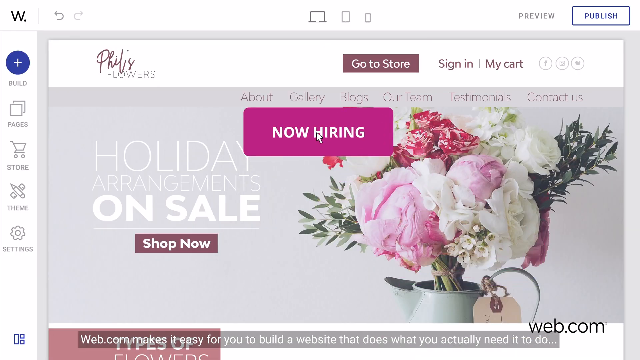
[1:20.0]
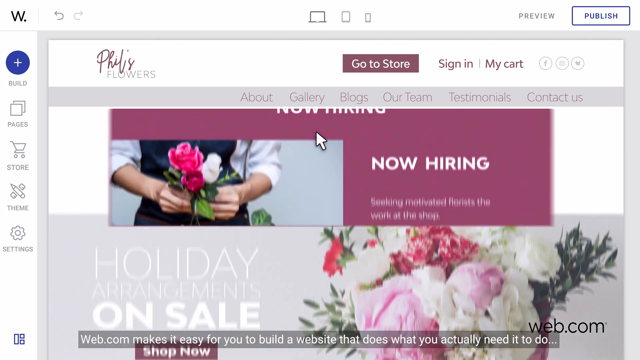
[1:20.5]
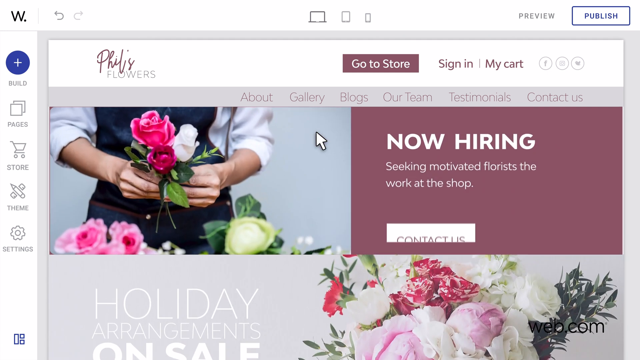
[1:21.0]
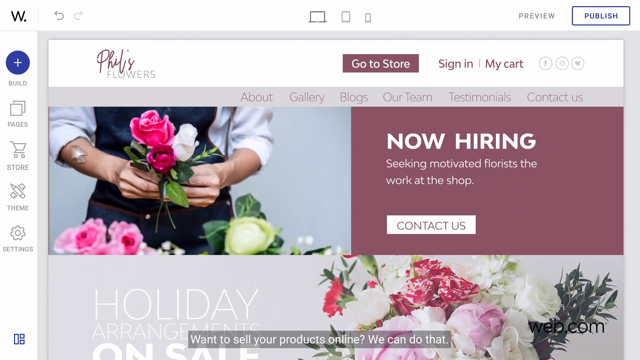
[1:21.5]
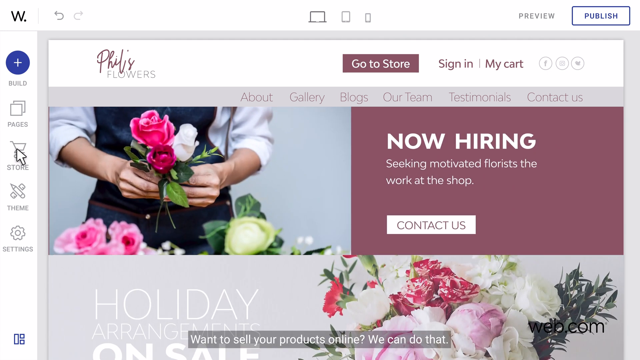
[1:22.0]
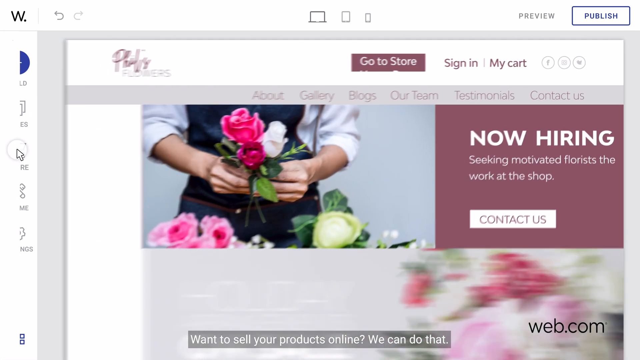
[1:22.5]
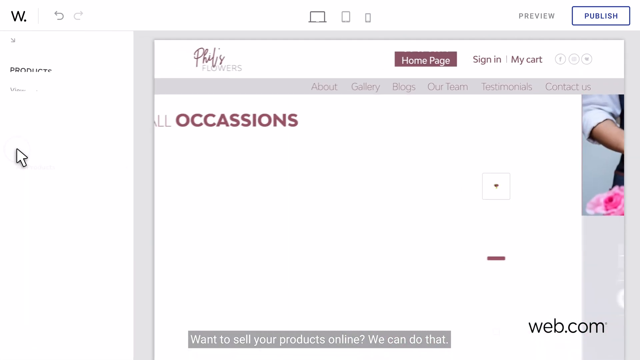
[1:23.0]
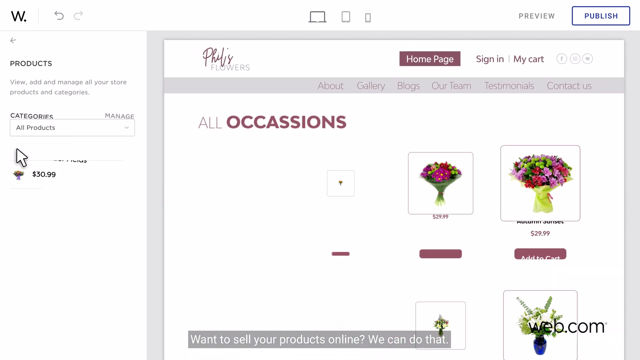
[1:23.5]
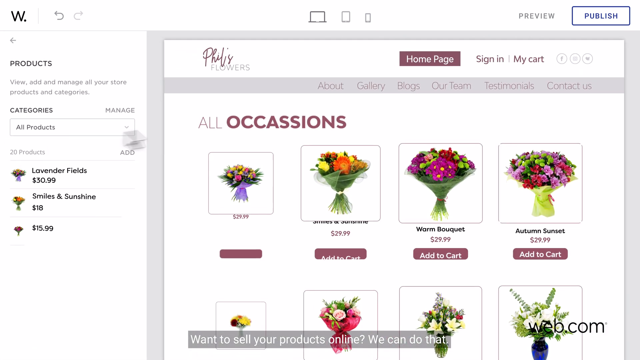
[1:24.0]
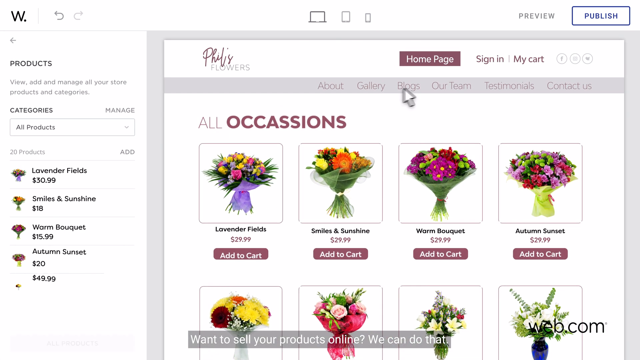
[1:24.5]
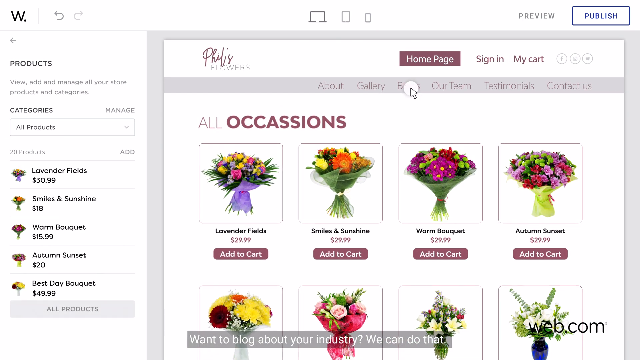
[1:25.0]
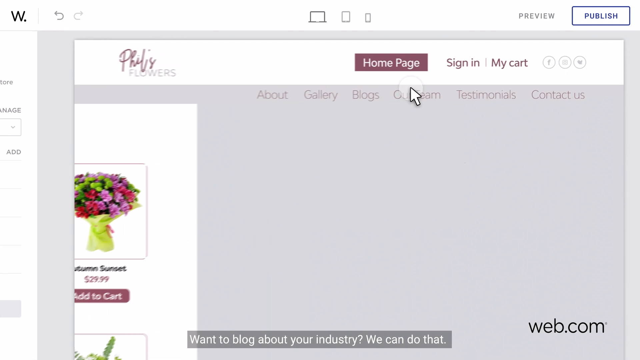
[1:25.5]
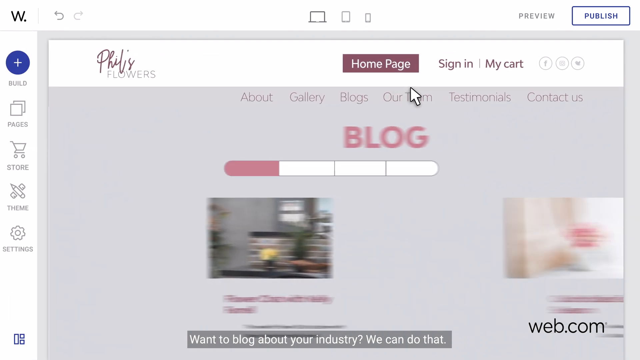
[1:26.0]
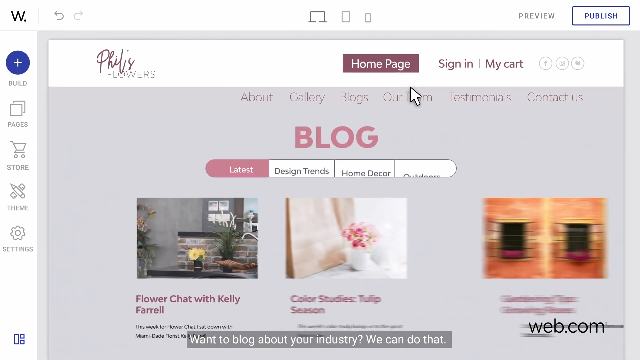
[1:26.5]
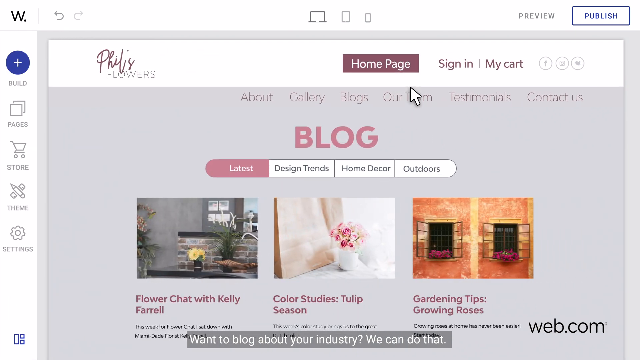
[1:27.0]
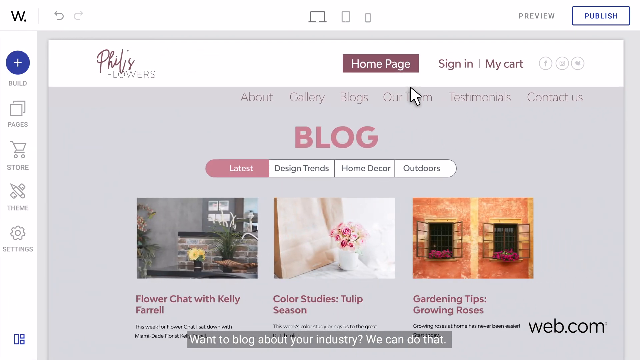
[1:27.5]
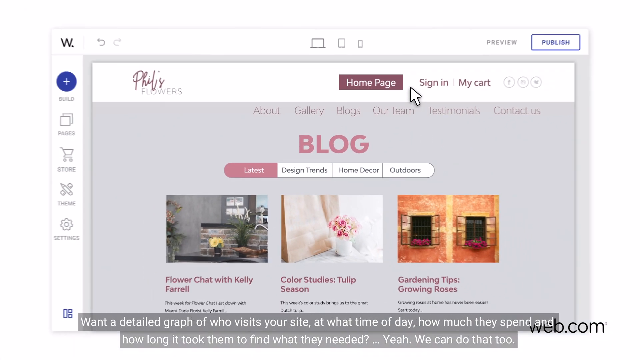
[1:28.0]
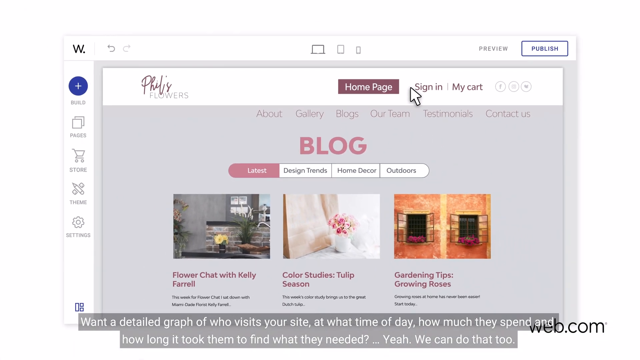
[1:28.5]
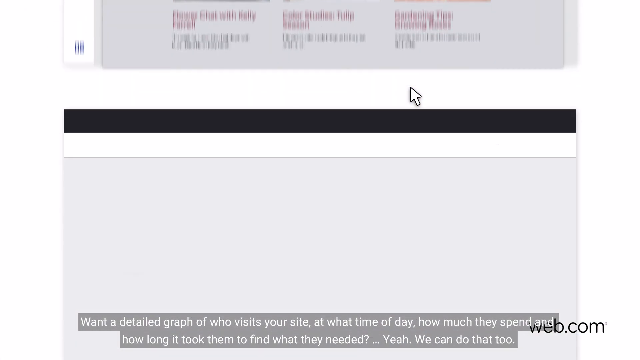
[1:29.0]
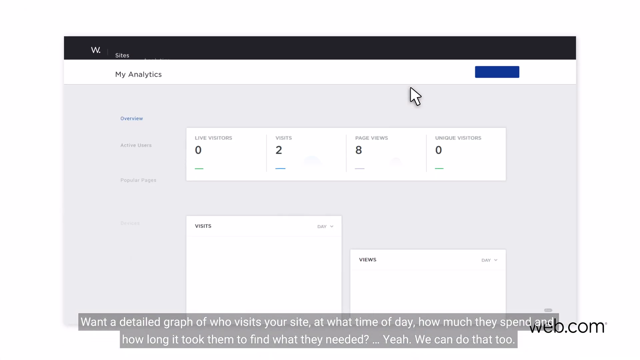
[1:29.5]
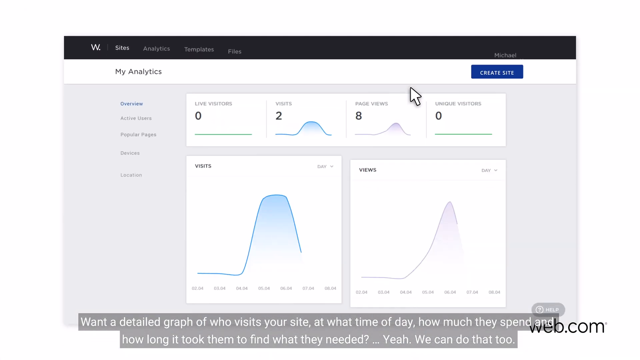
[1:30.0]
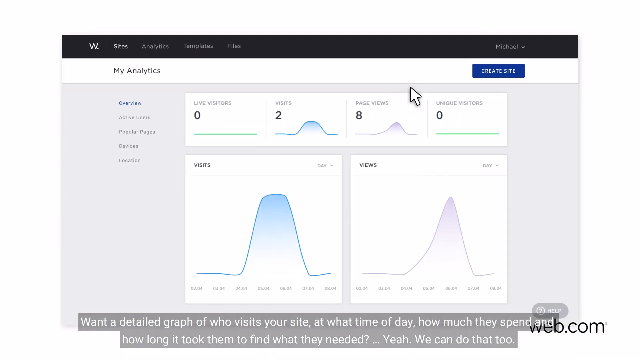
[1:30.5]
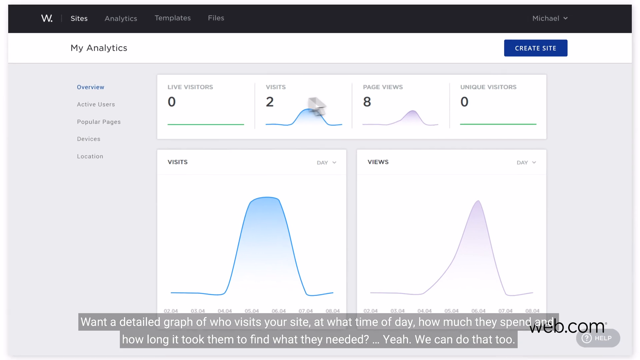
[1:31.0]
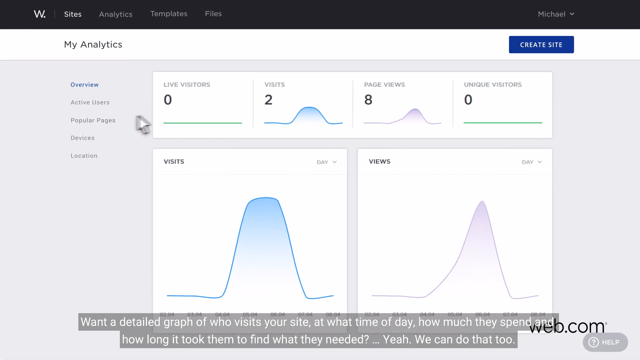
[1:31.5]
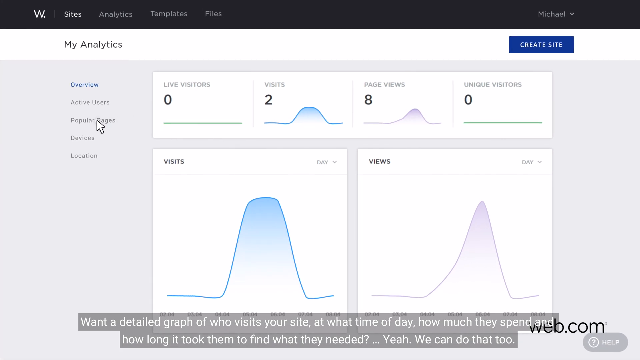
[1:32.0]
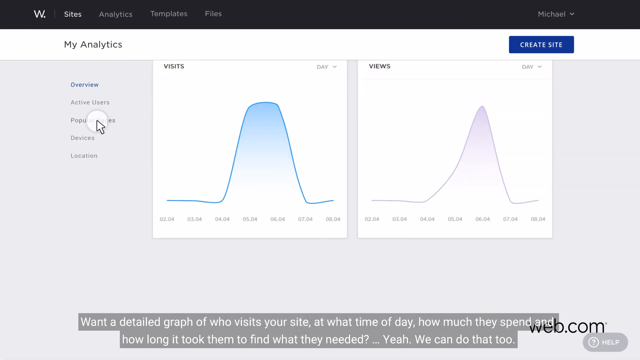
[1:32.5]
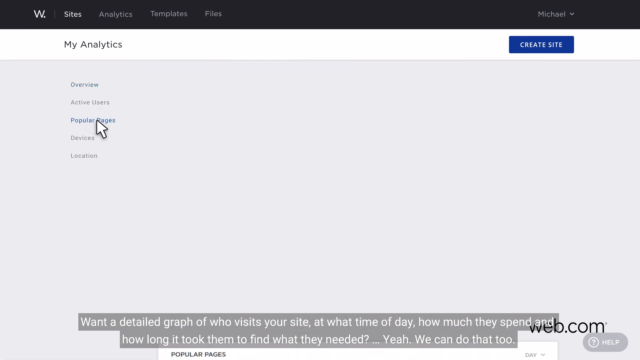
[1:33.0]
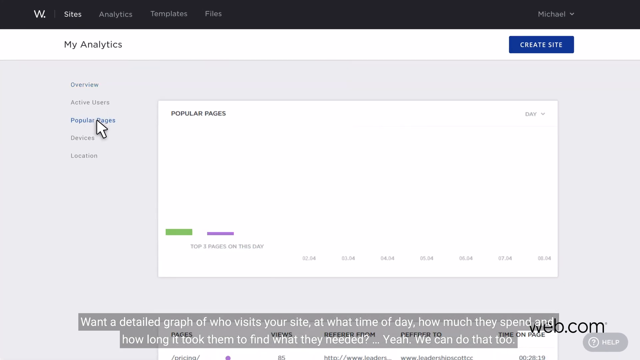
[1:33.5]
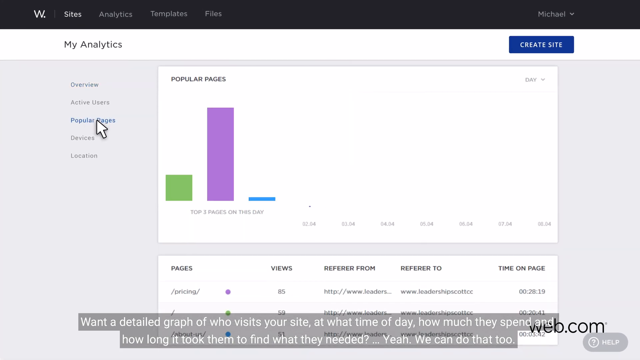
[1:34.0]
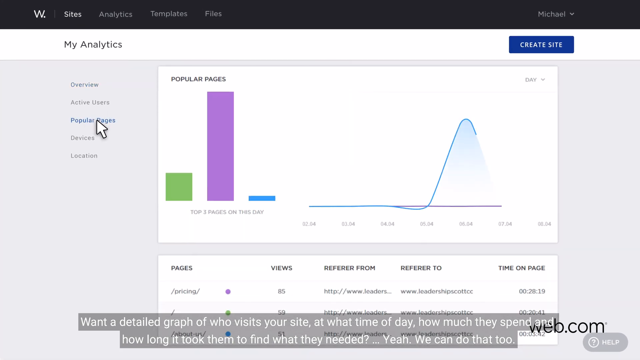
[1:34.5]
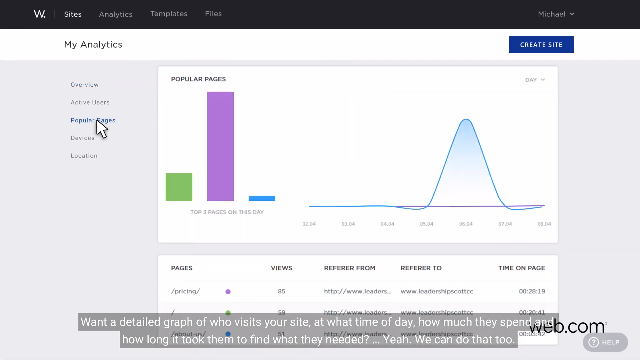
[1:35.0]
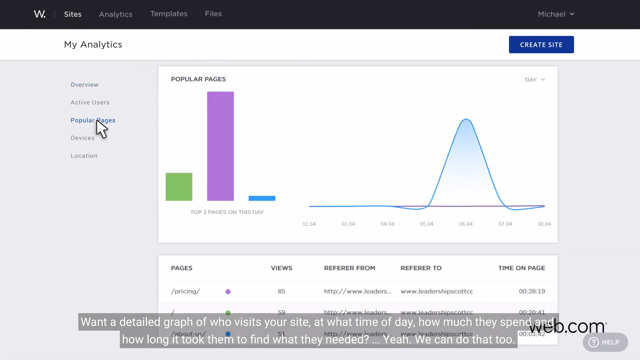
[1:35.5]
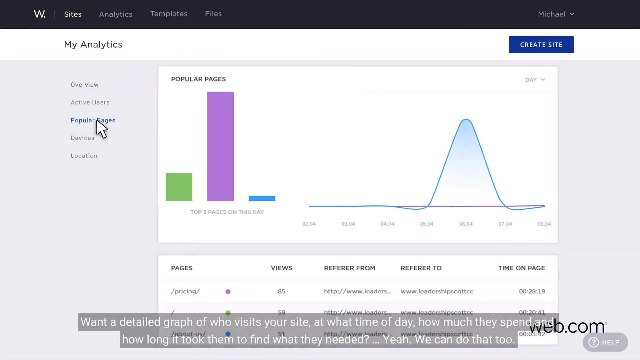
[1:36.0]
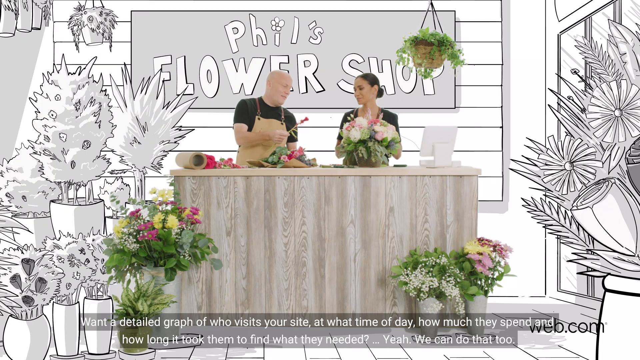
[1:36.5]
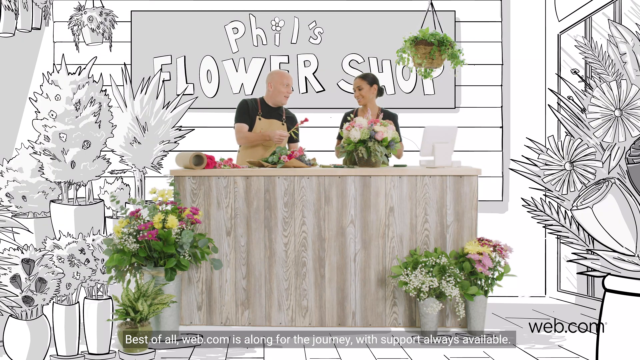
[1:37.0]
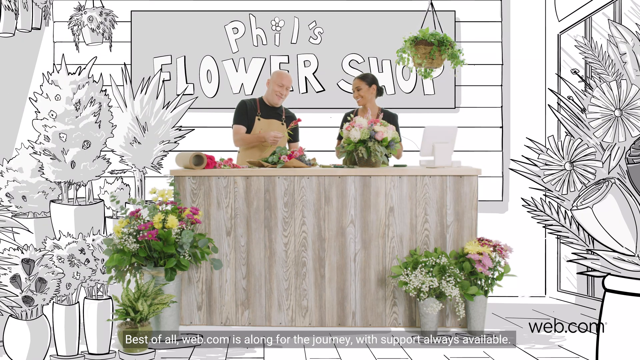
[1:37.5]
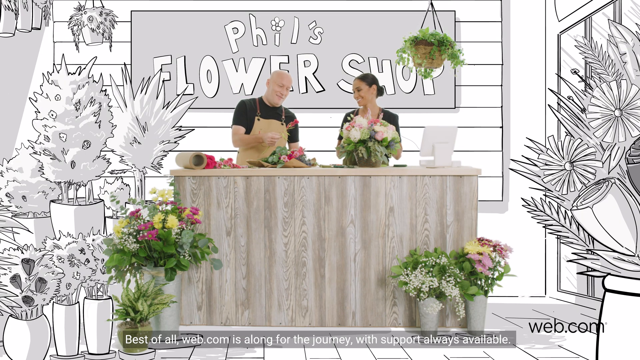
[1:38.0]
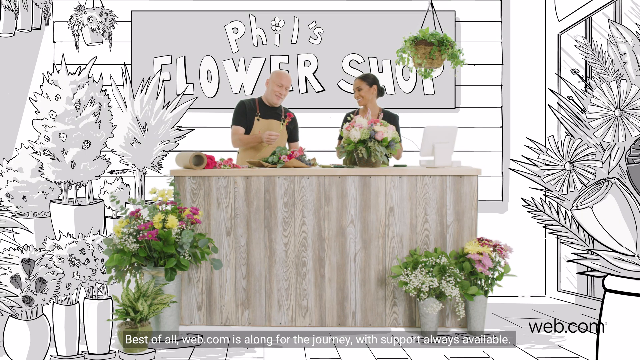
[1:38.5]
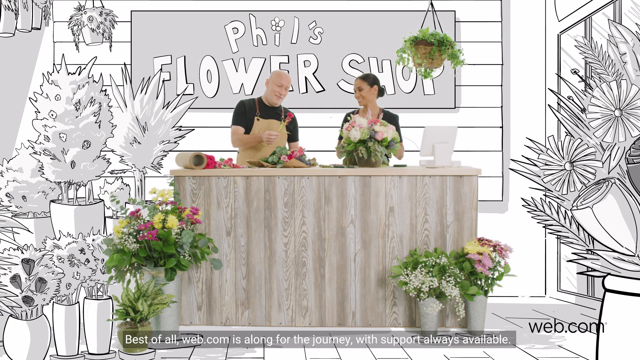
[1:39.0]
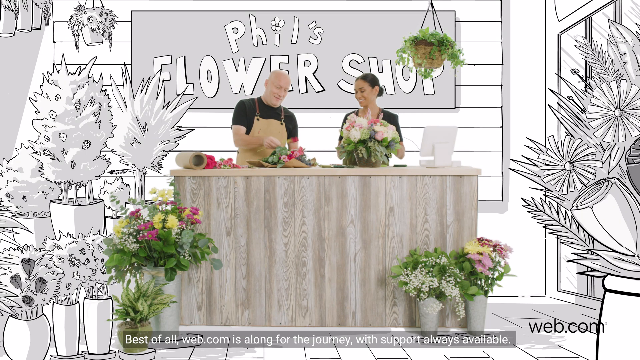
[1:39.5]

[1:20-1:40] The website builder shows a grid-style overview of the flower bouquets the flower shop sells, with the text "all locations". An arrangement called "Lavender Fields" costs $29.99, with an add to cart button below it. In a similar style, a bouquet called "Smiles and Sunshine" has orange, yellow and red flowers for $29.99; "Warm Bouquet" has purple flowers with some green flowers in it, also $29.99; and "Autumn Sunset" has pink, red and green accents, also $29.99. Below are four more images of flowers whose names cannot be seen. A subtitle says "want to sell your product online? We can do that." The mouse pointer clicks on blogs, and an overview titled "blog" appears, with four items that look like sorting options, reading "the latest design trends, home decor and outdoors". Underneath are three images with titles below, presumably blog entries. The first, "Flower Chat with Kelly Farrell", shows a small flower pot on a kitchen countertop with a brick background and a gray wall, part of a tap on the right, and a plant next to the tap. The second, "Color Studies Tulip Season", shows a vase of flowers that do not look like tulips on a white table, with a paperback standing next to it. The third, "Gardening Tips Growing Roses", shows two open windows in a tan wall, with flower pots of purple flowers hanging outside the window. A subtitle says "want a detailed graph of who visits your site at what time of the day, how much they spend and how long it took them to find what they need. Yeah, we can do that too." An analytics screen then shows "my analytics overview, active users, popular pages, devices, location" and multiple graphs of those metrics. The pointer clicks on popular pages, more graphs appear, and the video returns to Phil's flower shop with the cartoon background, the photo-style countertop, and the man in the black t-shirt and tan apron. A lady with dark hair in a bun now stands next to him, smiling and looking at the flower arrangement he is making; she has a flower arrangement in front of her as well.